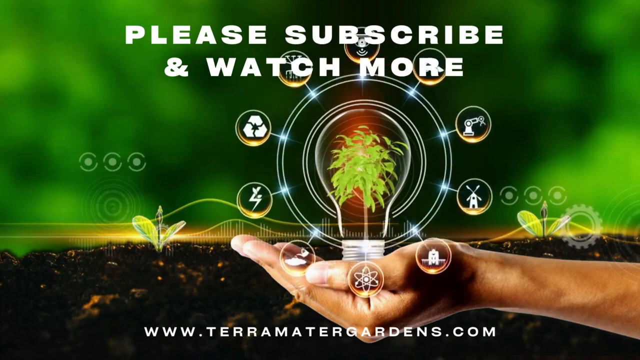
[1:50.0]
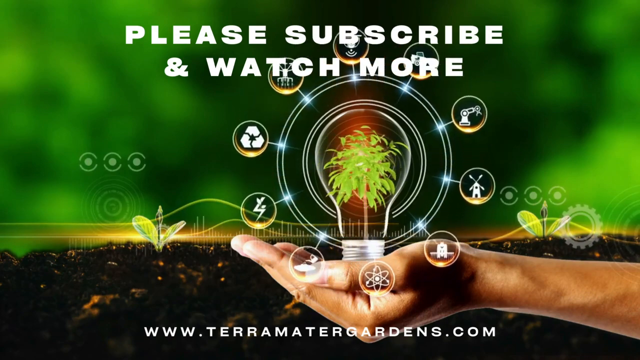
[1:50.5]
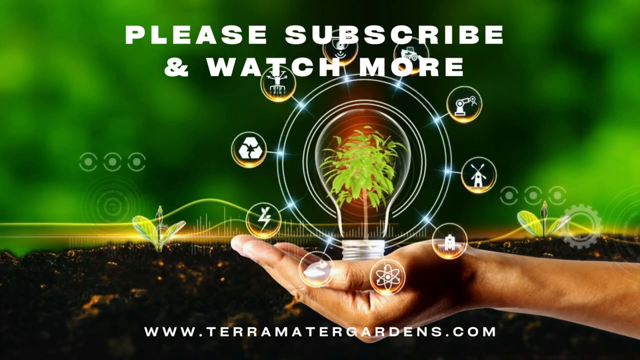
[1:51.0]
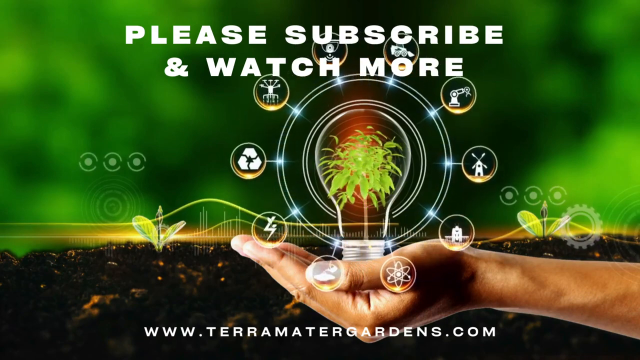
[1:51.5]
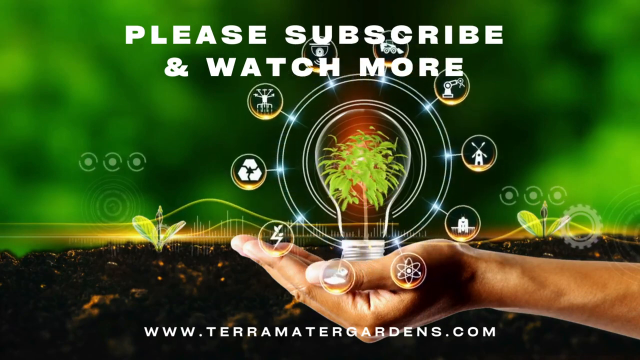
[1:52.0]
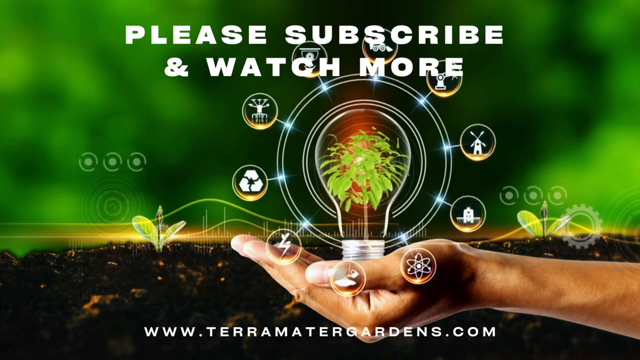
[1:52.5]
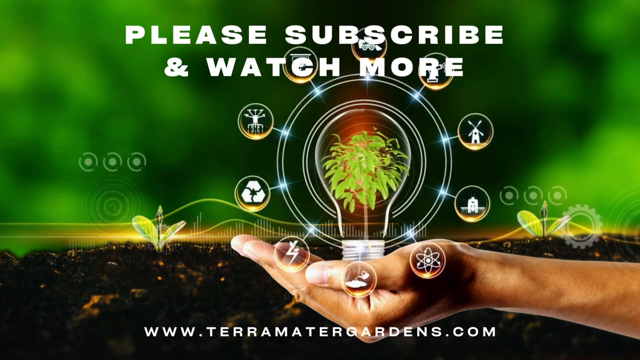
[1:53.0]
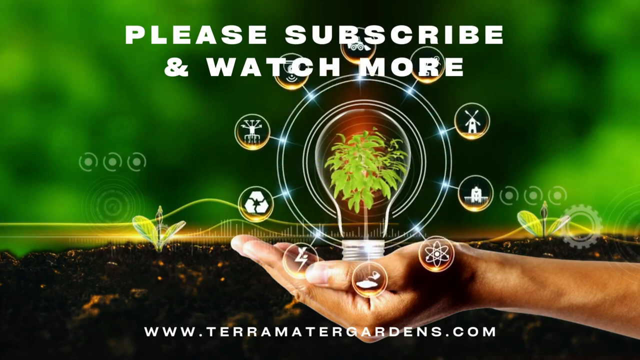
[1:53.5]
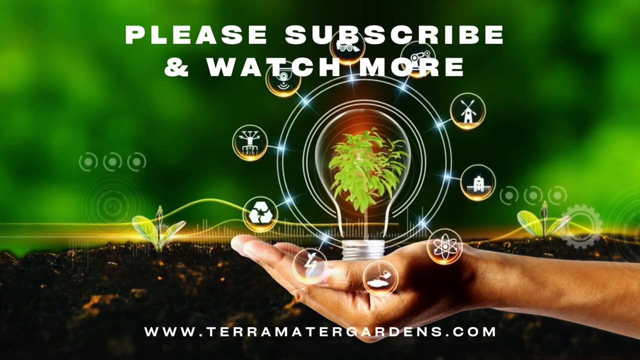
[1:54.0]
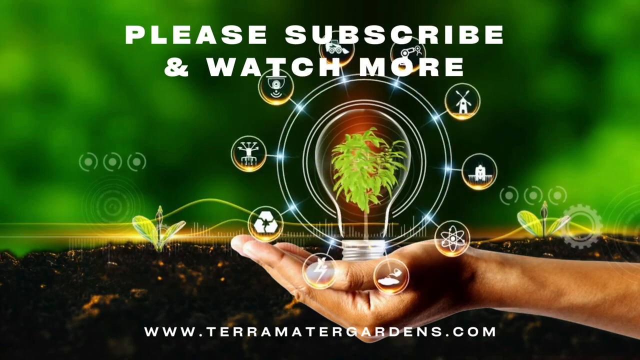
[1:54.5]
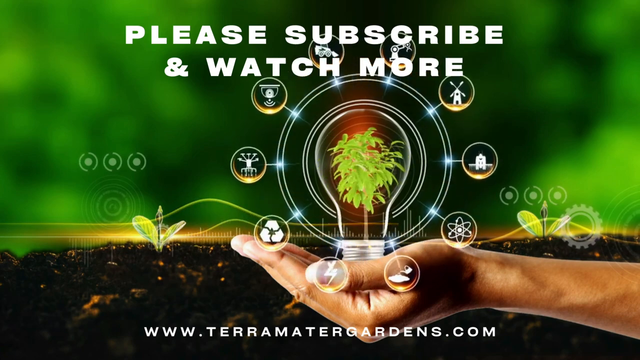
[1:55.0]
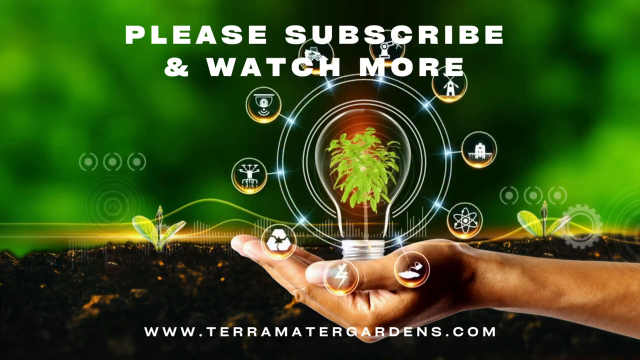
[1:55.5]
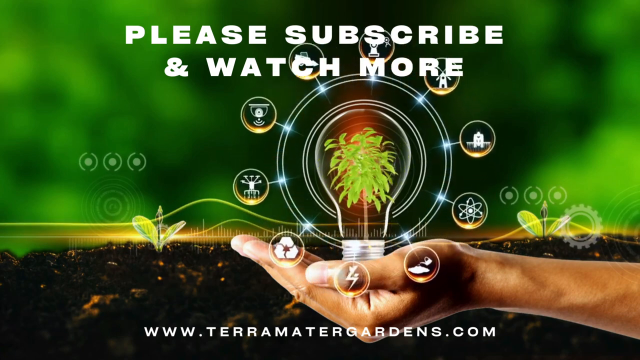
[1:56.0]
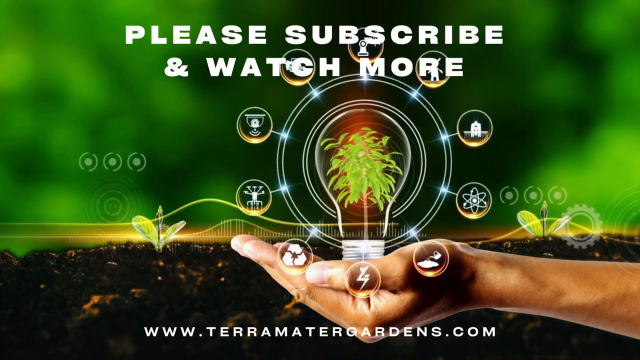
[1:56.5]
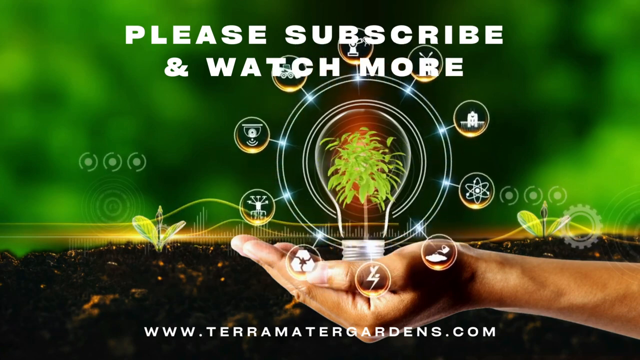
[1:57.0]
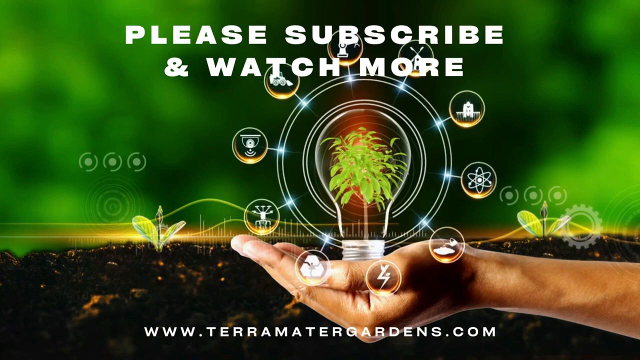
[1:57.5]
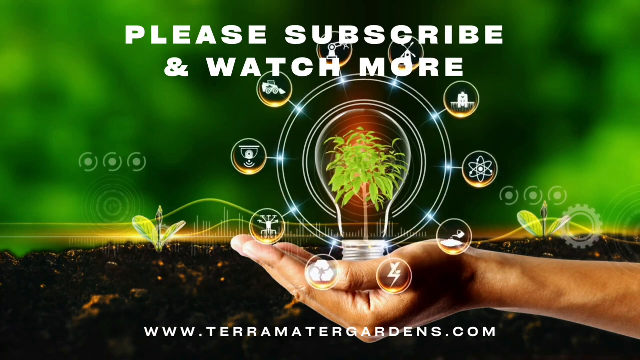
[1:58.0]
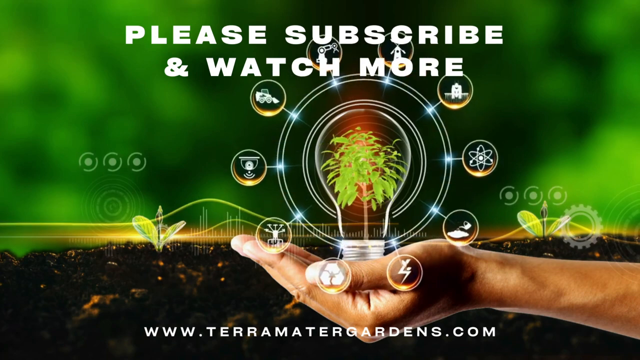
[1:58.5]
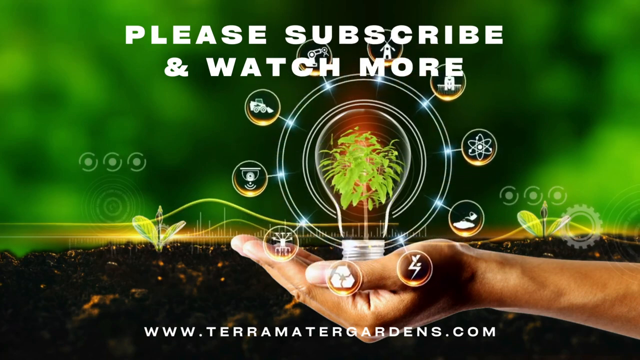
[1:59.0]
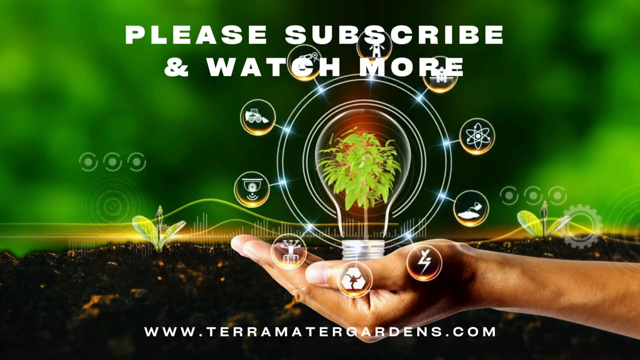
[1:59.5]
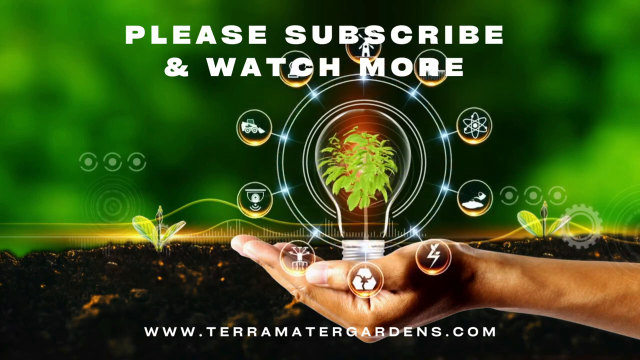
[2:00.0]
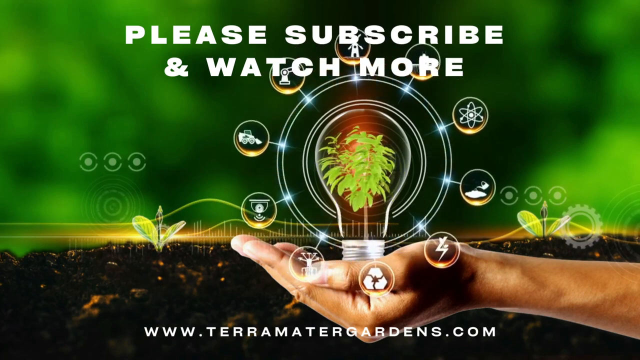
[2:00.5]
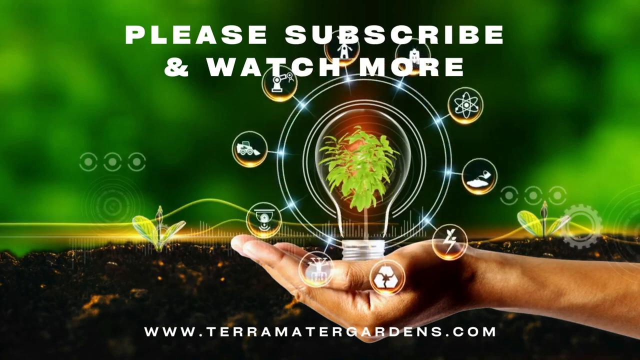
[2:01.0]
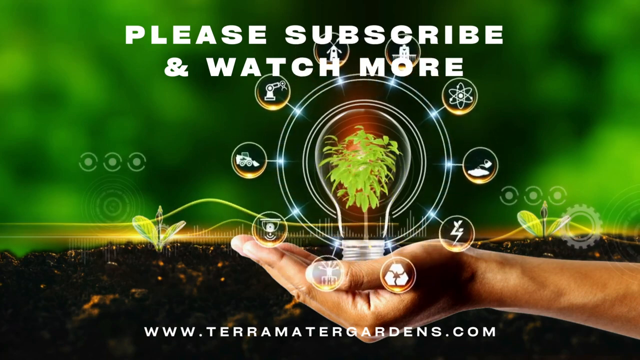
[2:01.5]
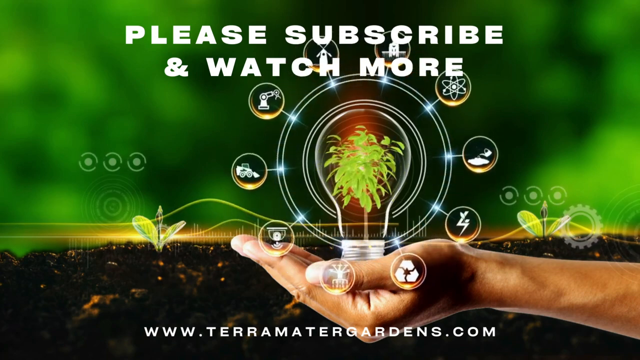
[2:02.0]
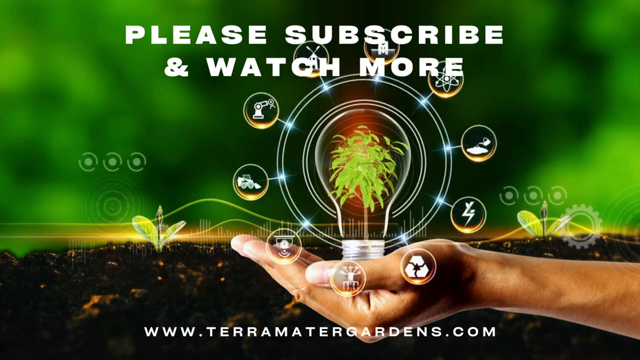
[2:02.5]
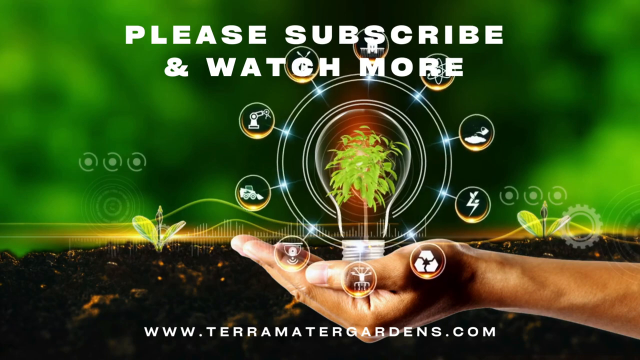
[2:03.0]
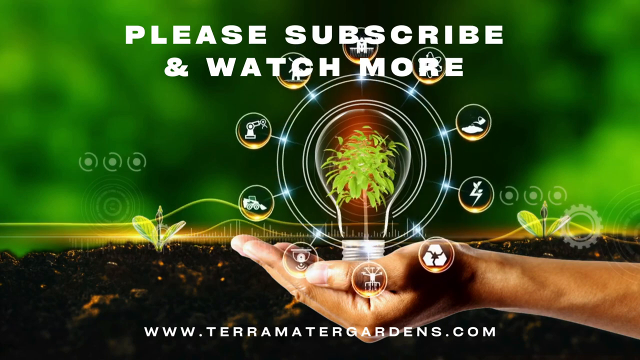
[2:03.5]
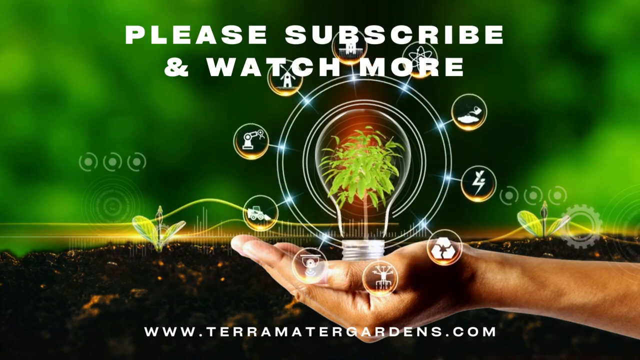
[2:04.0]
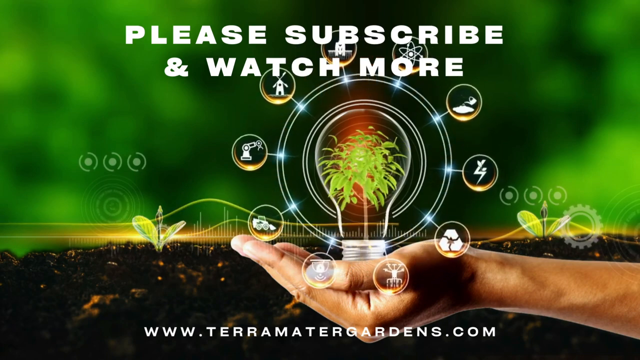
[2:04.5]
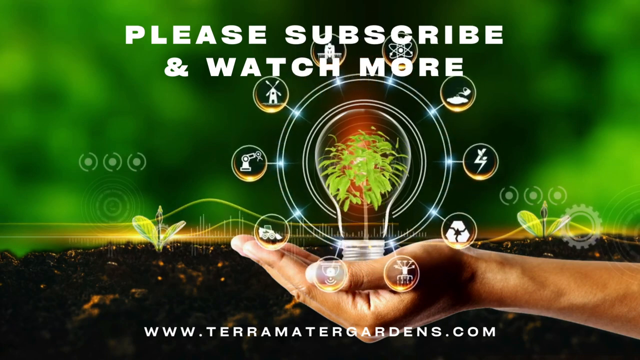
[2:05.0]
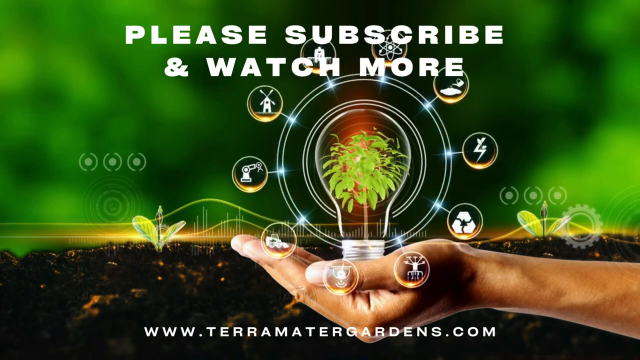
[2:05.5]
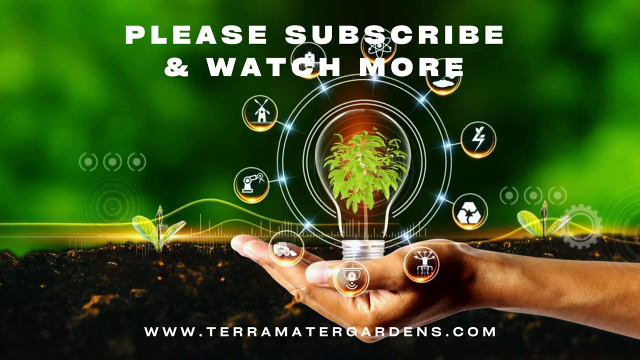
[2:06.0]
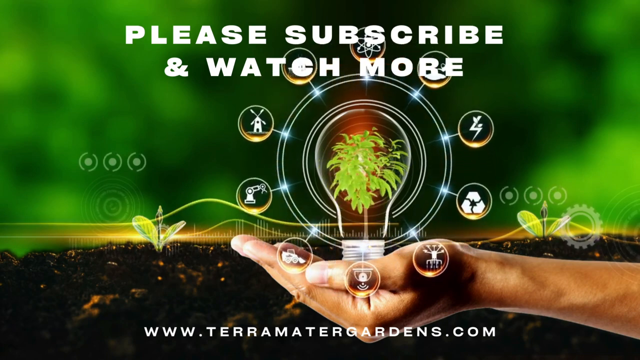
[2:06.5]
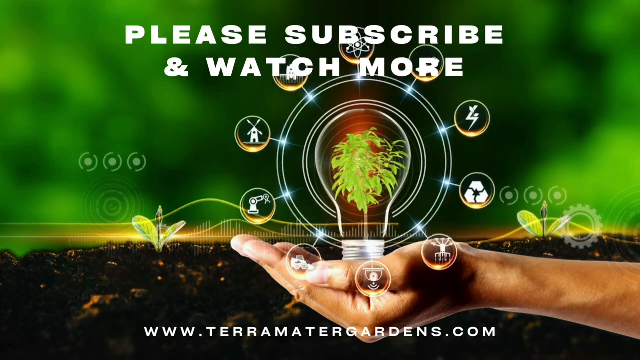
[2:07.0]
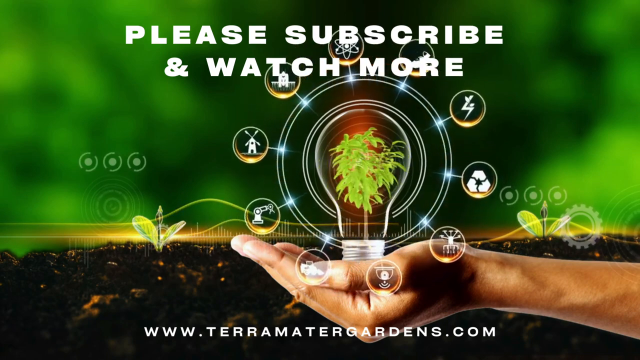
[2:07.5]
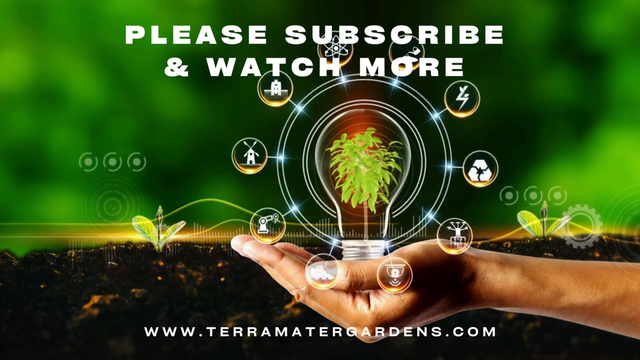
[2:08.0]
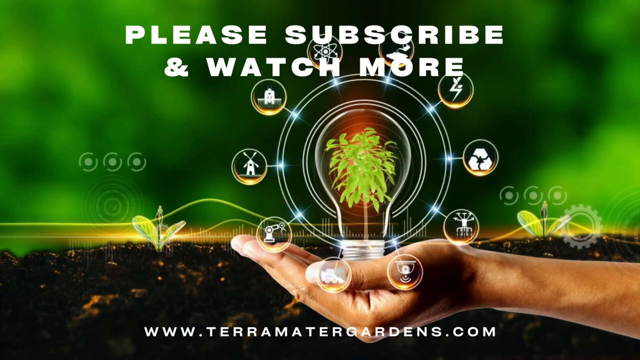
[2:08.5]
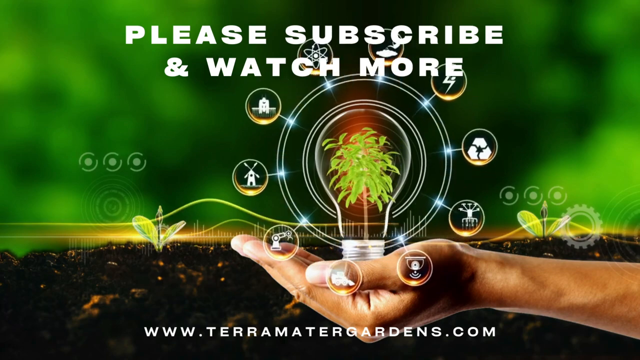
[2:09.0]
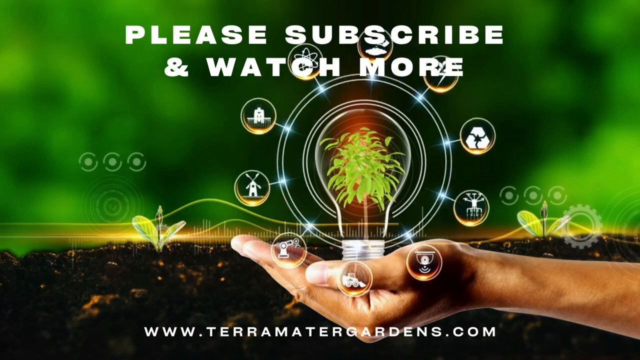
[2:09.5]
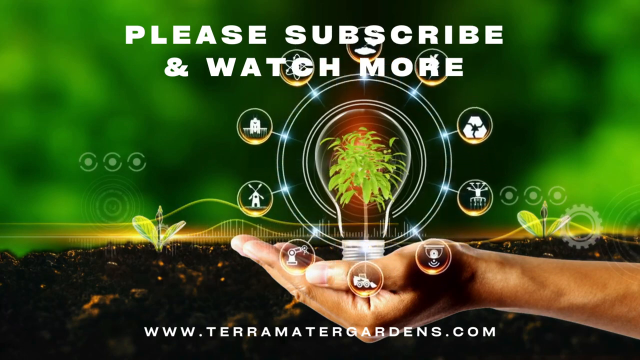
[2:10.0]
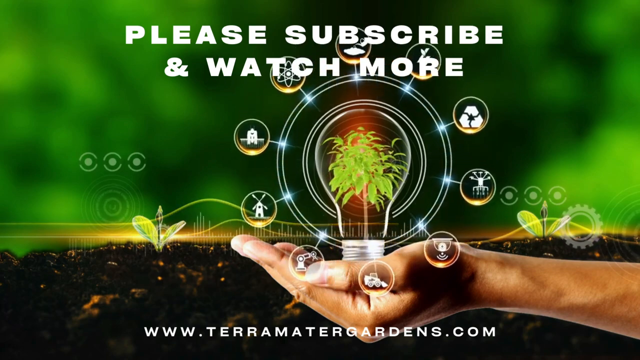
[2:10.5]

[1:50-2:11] What looks like an end screen shows big white all-caps lettering reading "please subscribe and watch more" over a blurry green background with dirt and little seedlings popping up. A brown hand, obviously a stock photo, comes in from the right-hand side holding a clear illustration of a light bulb with a tree growing in it. A bunch of little circles surround the light bulb, containing icons: a recycling symbol, several that cannot be made out, one that looks almost like a truck, a windmill, what looks like an apartment building, an atom symbol, maybe what looks like ground with a watering can watering over it, and a lightning bolt. White text at the bottom reads "www.terramadergardens.com." This plays over the end of the video.